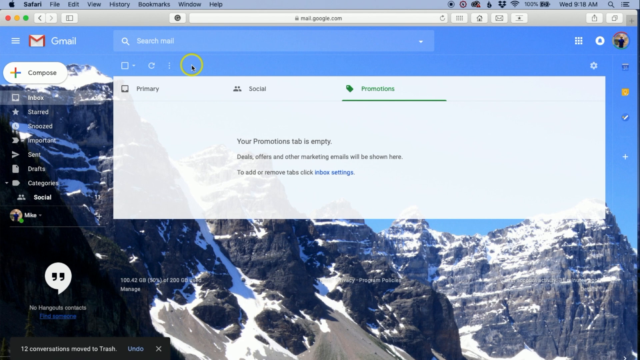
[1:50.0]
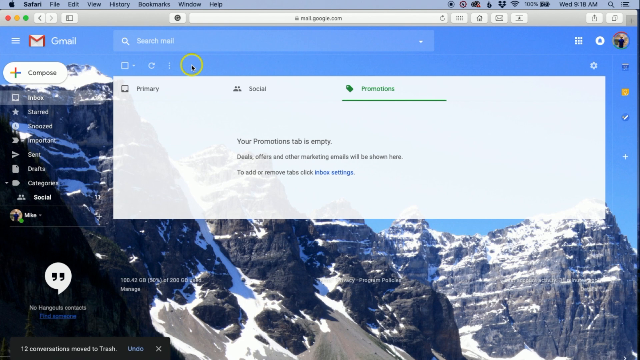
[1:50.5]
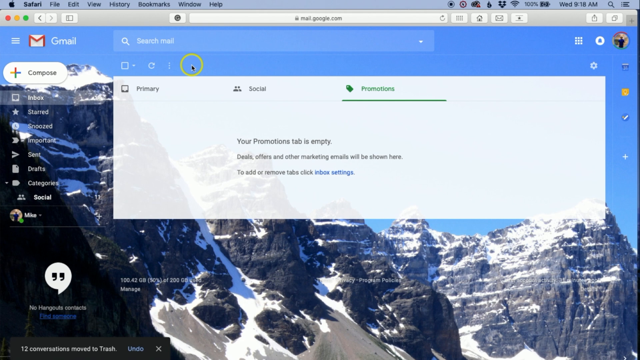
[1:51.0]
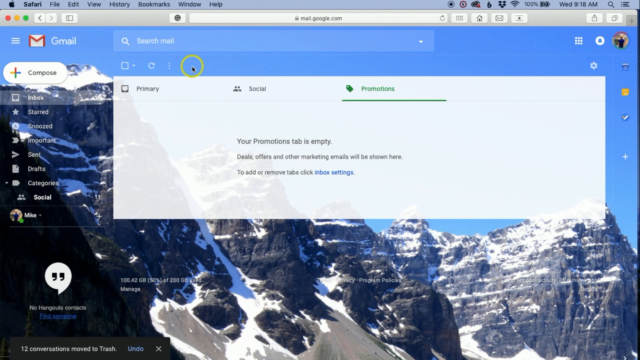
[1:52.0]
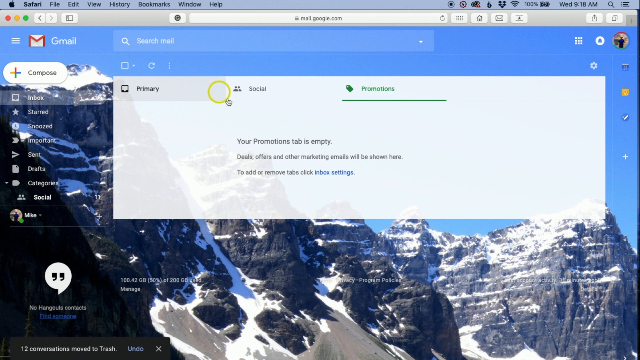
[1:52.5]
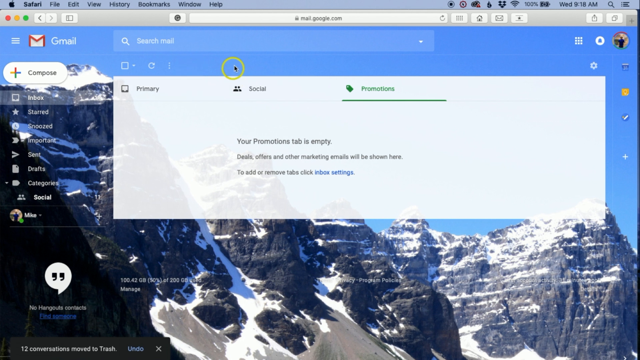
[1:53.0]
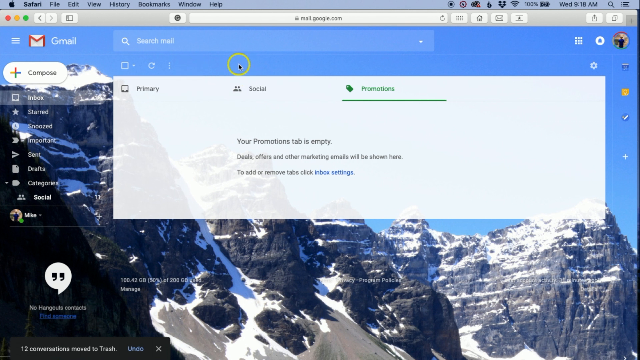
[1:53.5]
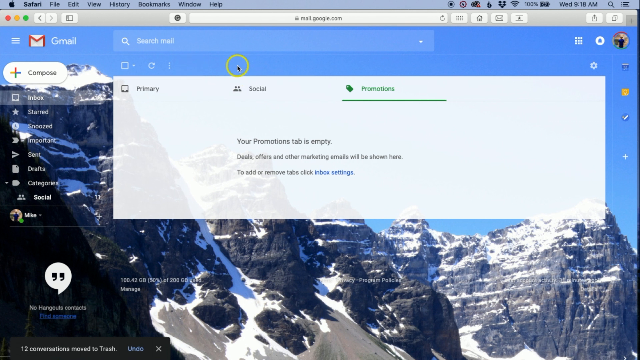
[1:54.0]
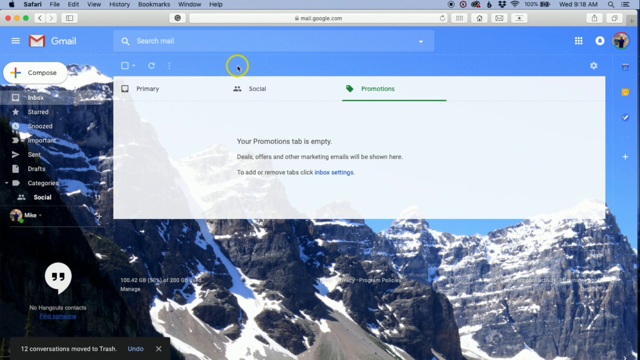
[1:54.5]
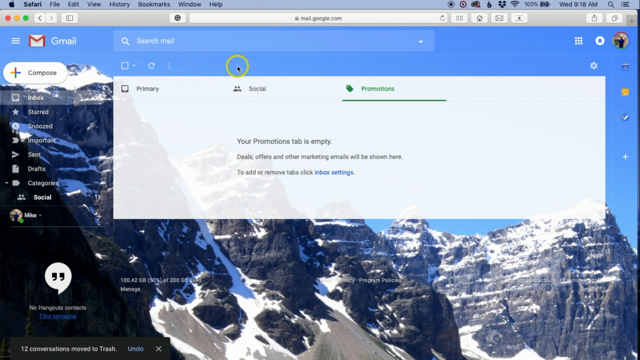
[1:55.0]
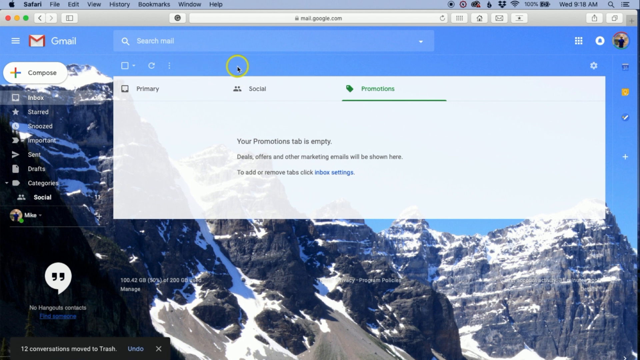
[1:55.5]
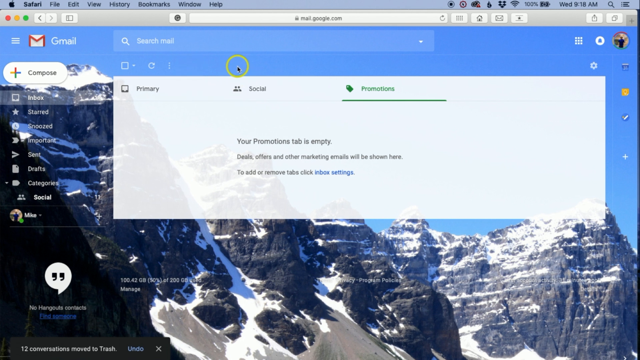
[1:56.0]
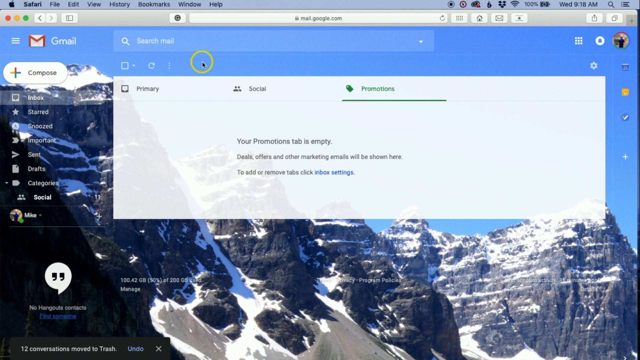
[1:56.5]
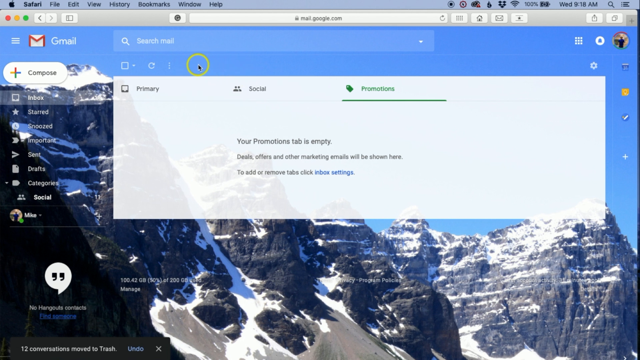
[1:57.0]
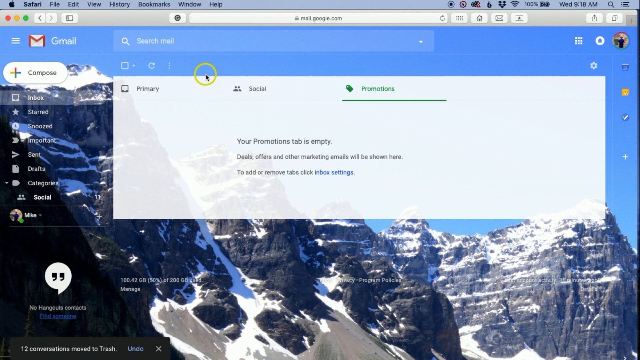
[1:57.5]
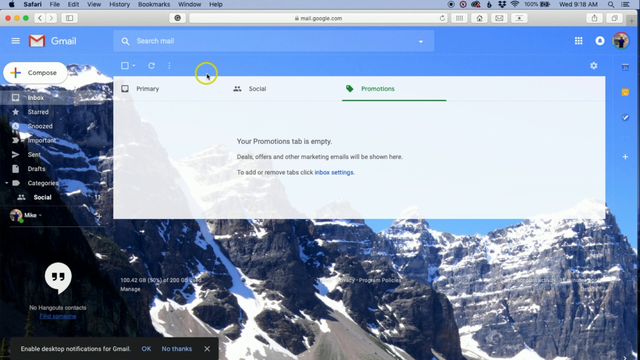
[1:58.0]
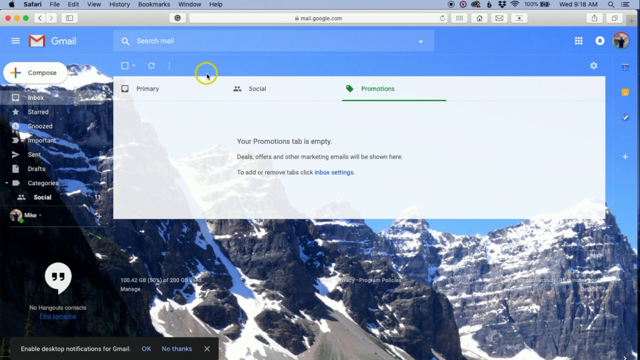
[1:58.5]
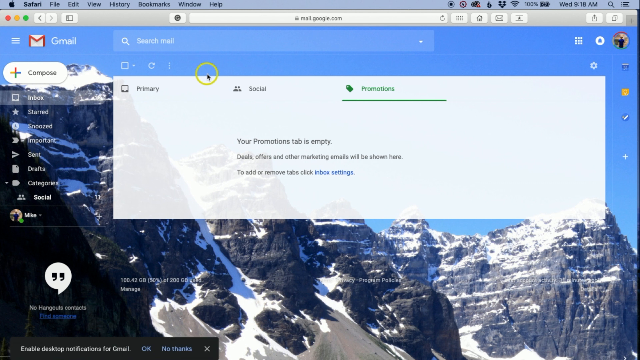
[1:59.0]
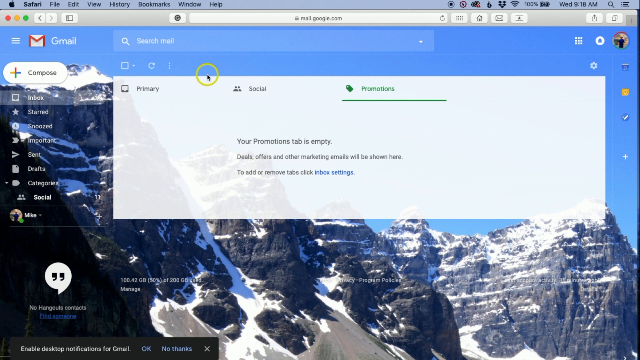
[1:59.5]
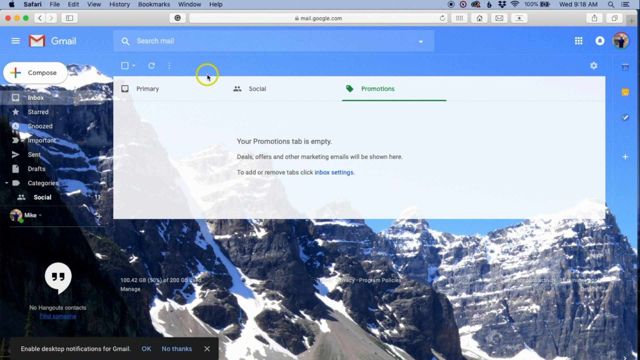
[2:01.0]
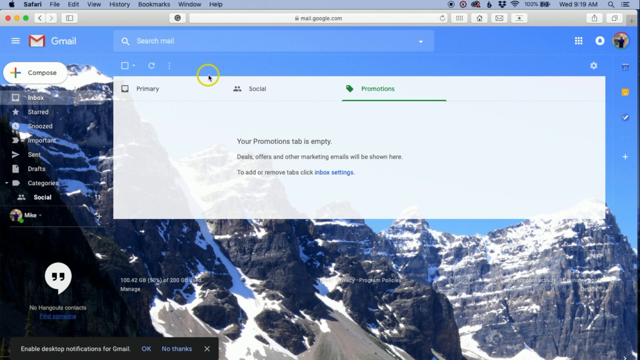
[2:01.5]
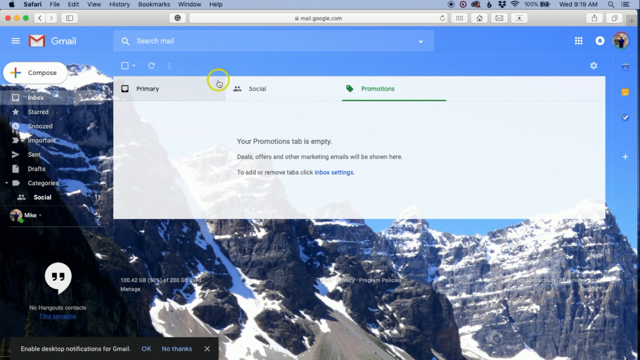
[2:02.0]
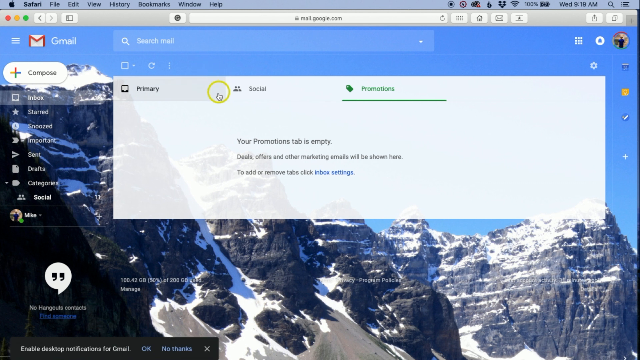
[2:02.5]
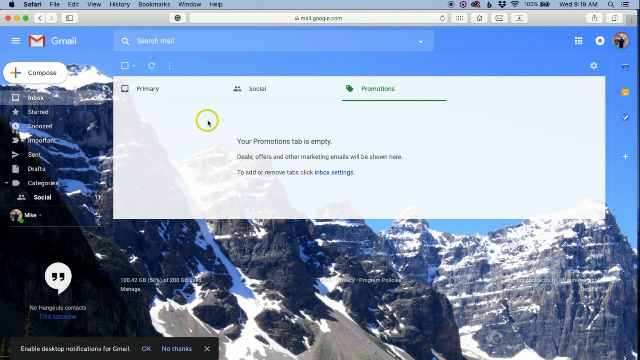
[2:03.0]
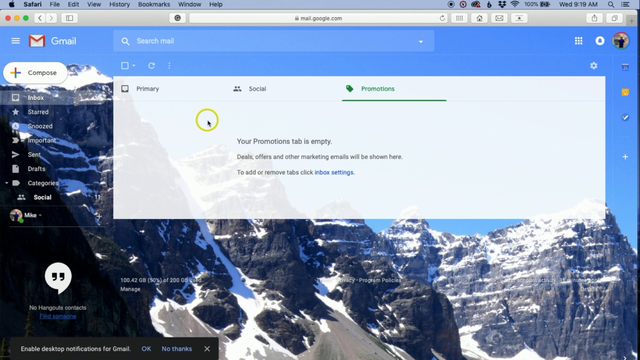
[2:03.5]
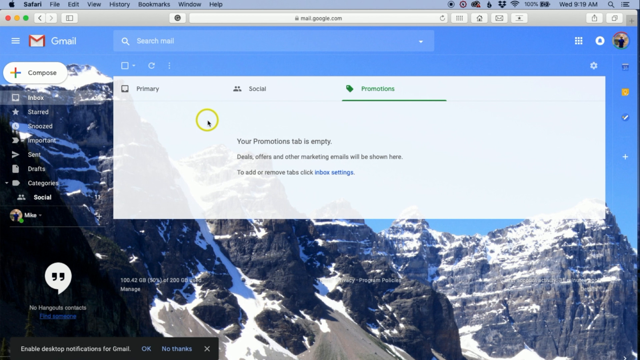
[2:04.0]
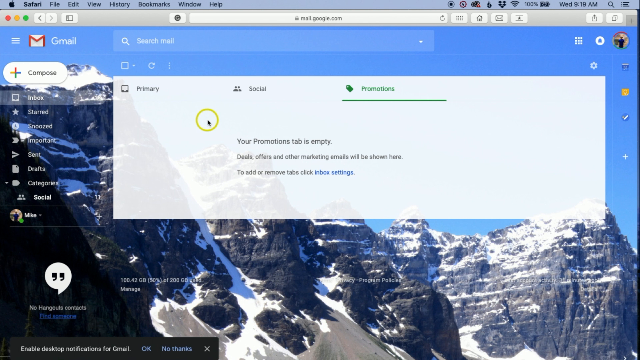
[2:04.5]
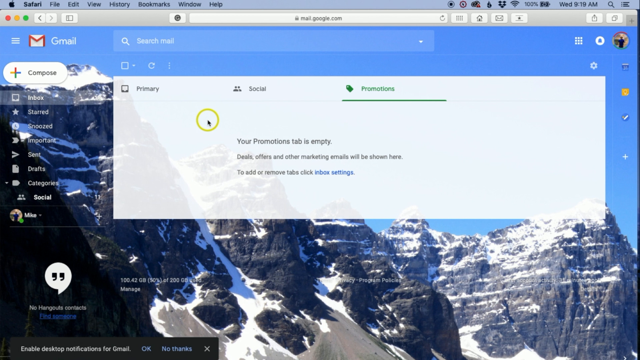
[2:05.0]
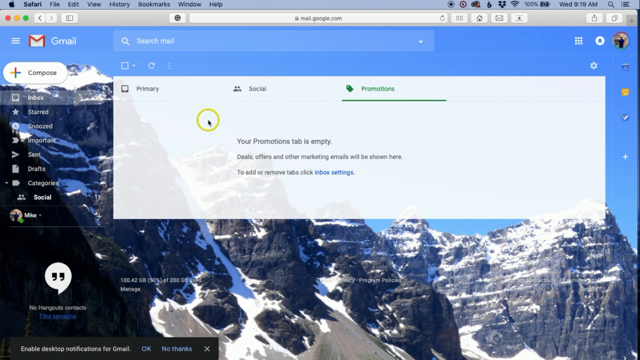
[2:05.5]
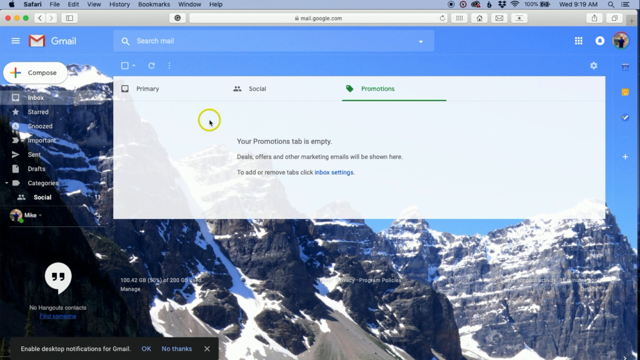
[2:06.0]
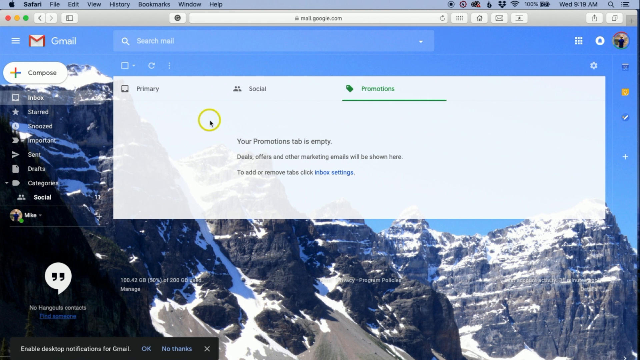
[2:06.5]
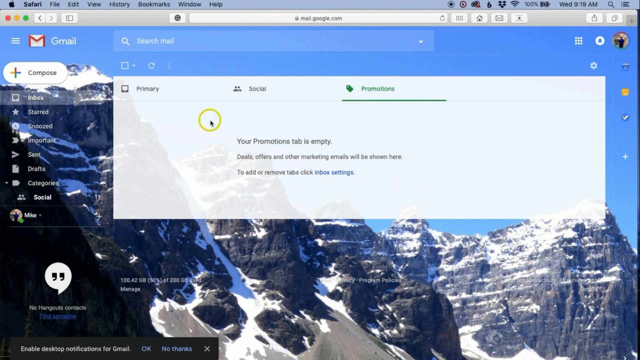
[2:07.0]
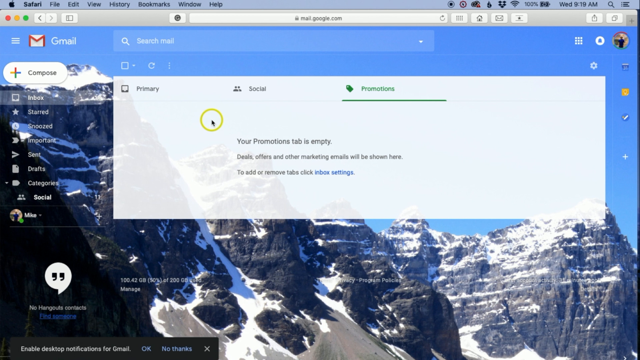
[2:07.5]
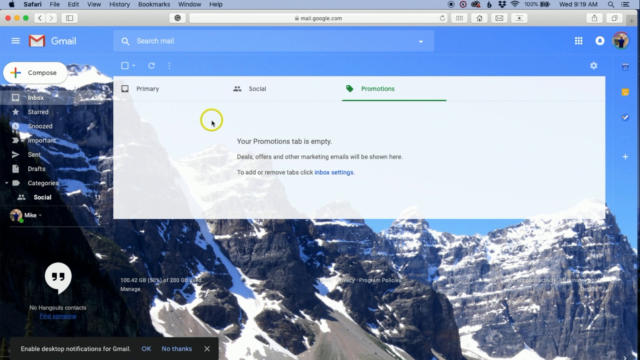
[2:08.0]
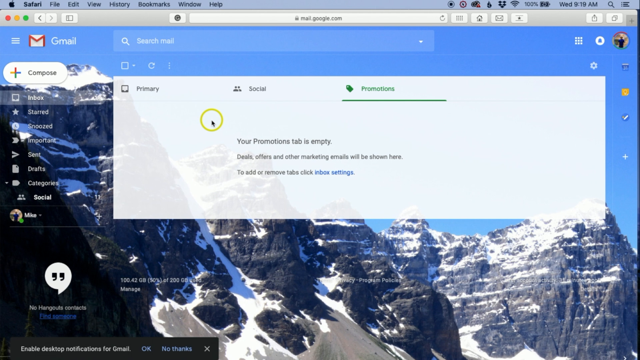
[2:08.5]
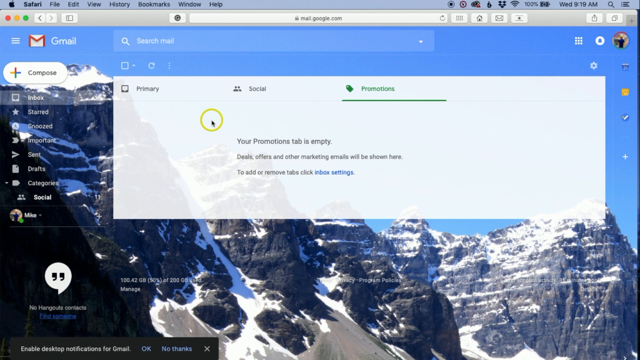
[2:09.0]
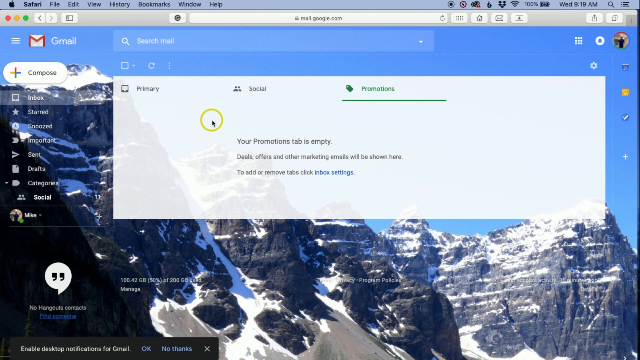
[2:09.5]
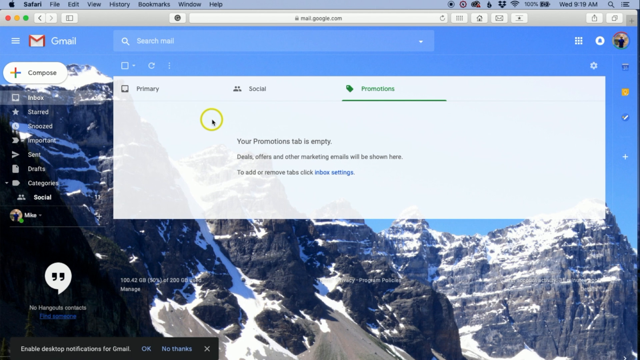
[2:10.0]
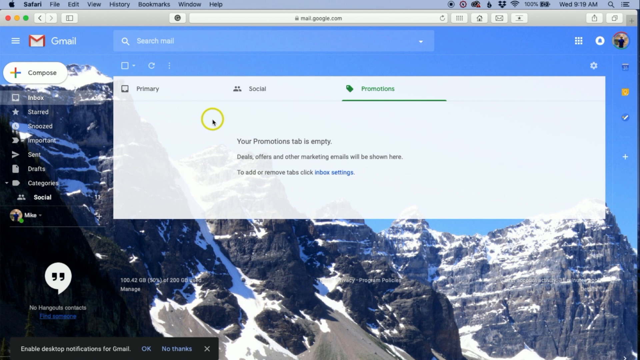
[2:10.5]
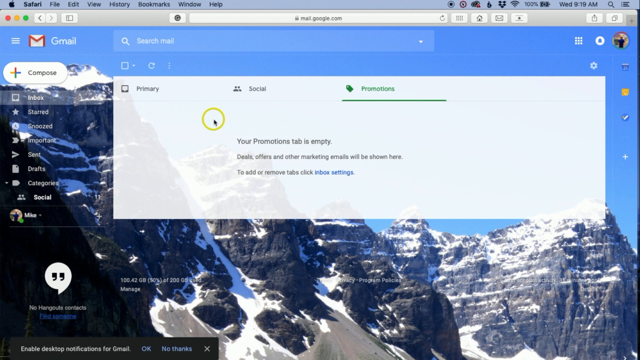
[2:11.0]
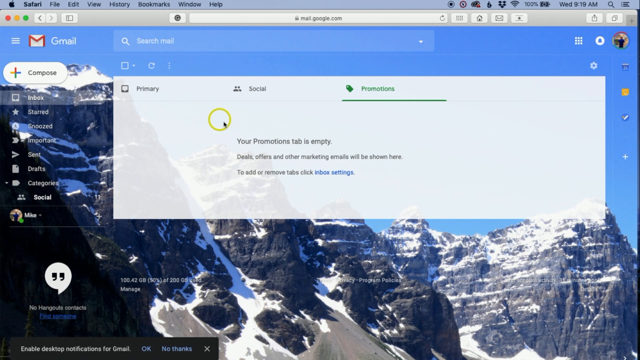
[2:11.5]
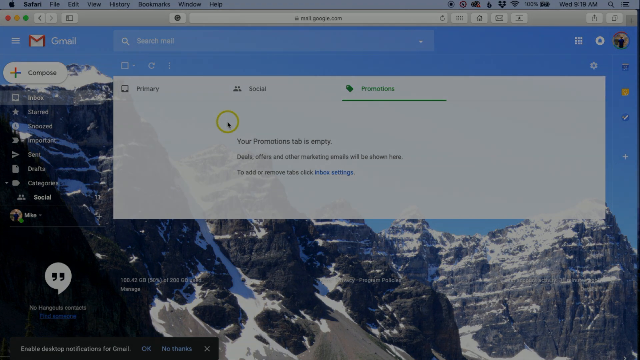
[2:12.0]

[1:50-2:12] The Promotions tab is empty, with text reading "Deals, Offers, and Other Marketing, as we've shown here. To add a remote tab, click Inbox Settings." The cursor hovers down to Social, then goes down to Primary. It lingers over the page, barely moving, and nothing changes, although the screen starts to slightly fade out. On the far left of the Gmail page are Inbox, Starred, Snoozed, Important, Sent, Categorized and Social. The very bottom says "No Hangouts Contacts", and 100 gigabytes of 200 are shown as used. The background is a snowy mountainscape. The Gmail inbox is empty after everything was deleted, with white in the center. There are three tabs, Primary, Social and Promotions, and Promotions is highlighted with green text.